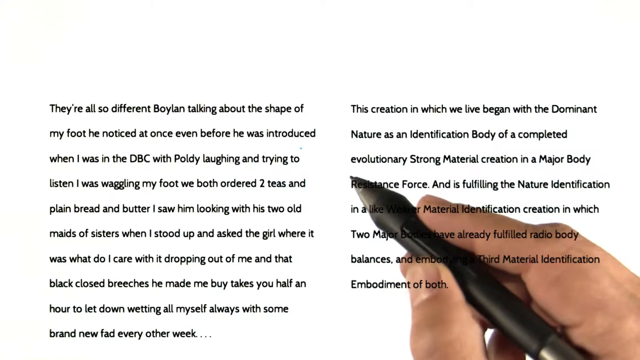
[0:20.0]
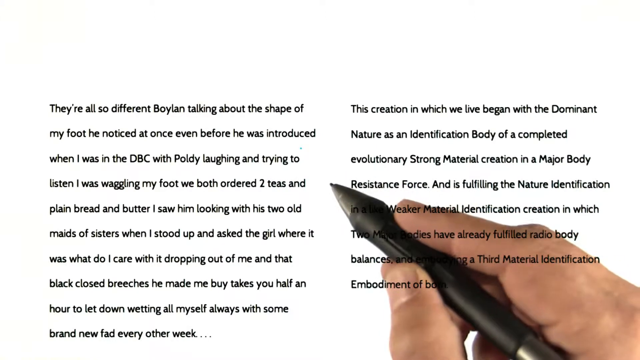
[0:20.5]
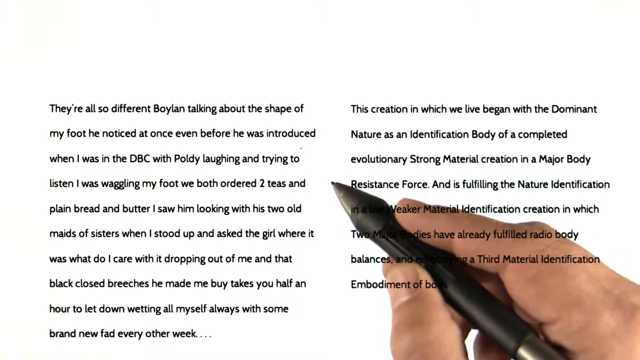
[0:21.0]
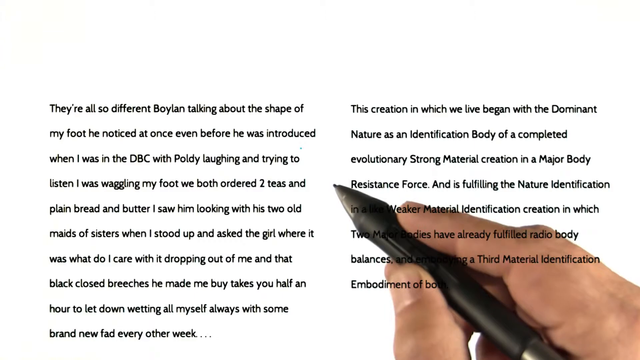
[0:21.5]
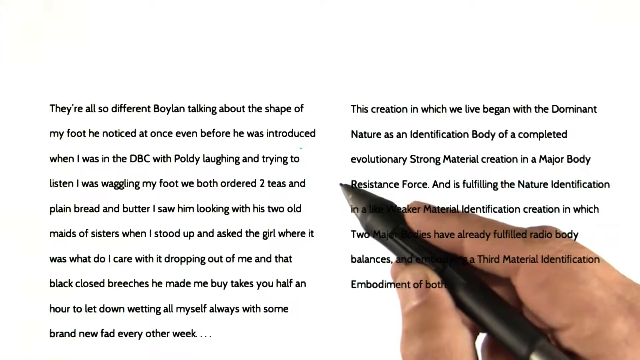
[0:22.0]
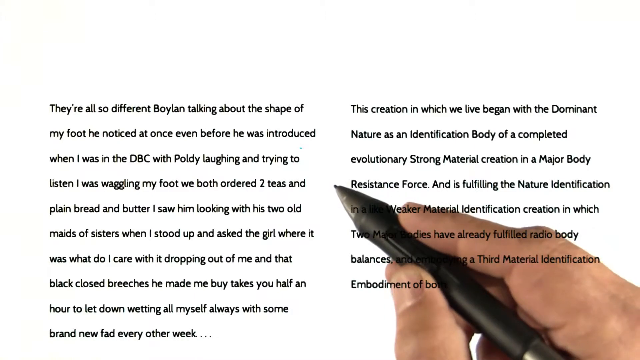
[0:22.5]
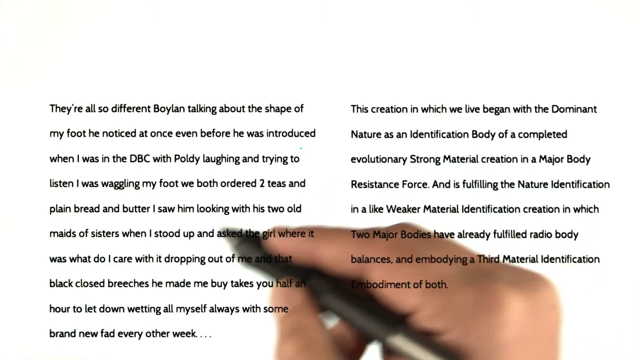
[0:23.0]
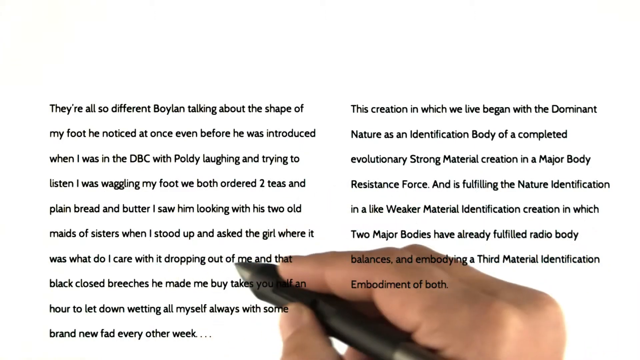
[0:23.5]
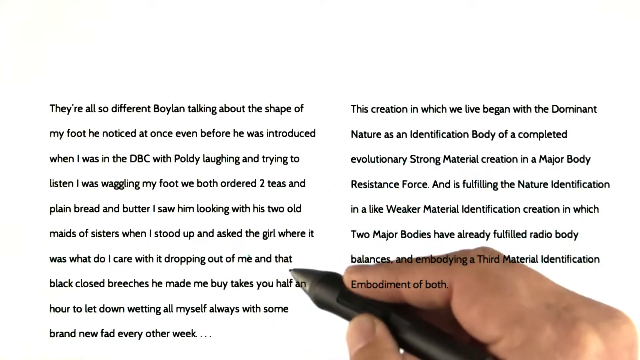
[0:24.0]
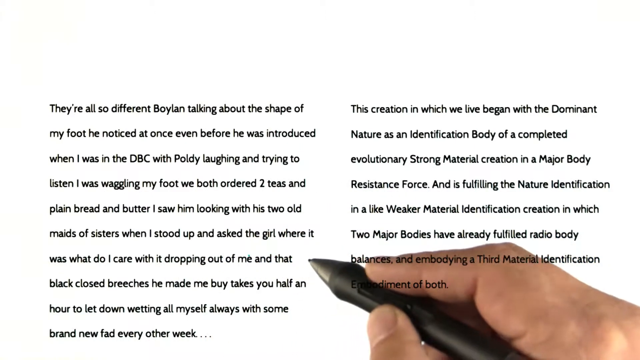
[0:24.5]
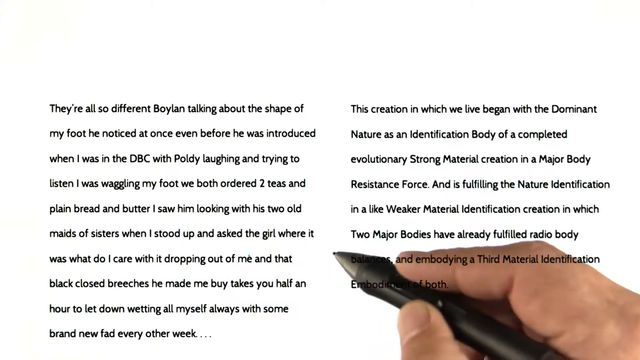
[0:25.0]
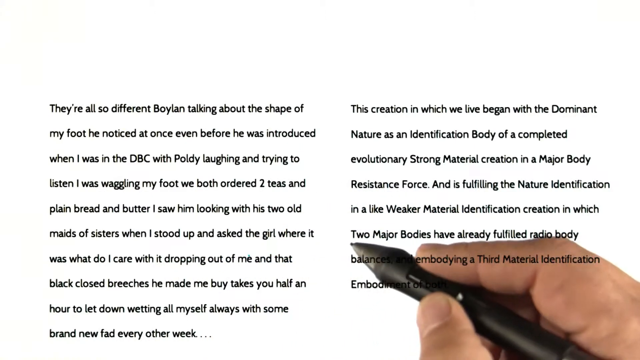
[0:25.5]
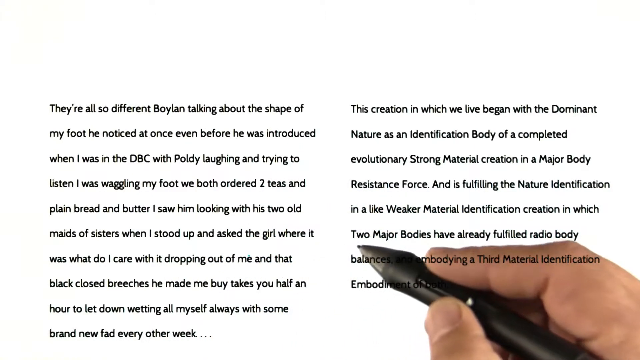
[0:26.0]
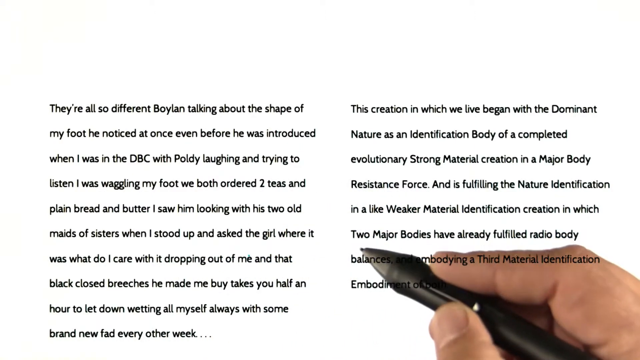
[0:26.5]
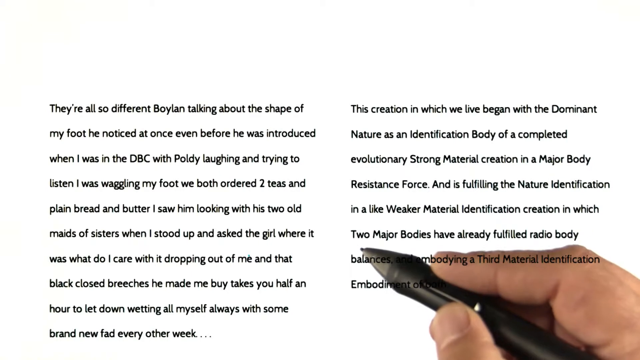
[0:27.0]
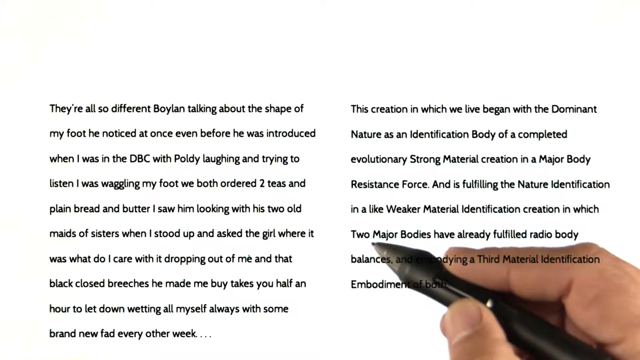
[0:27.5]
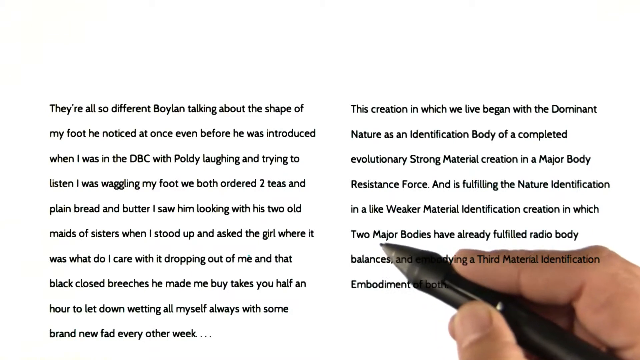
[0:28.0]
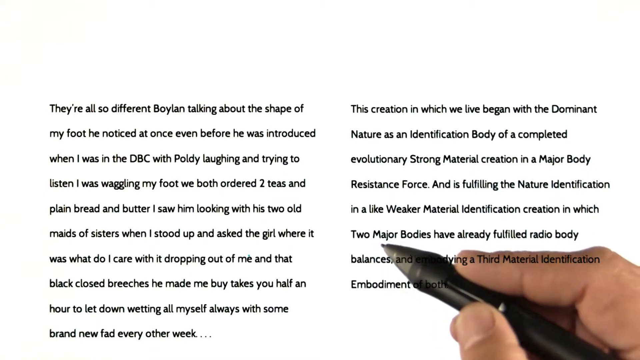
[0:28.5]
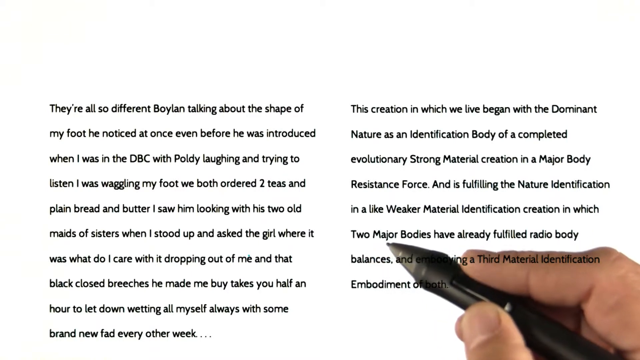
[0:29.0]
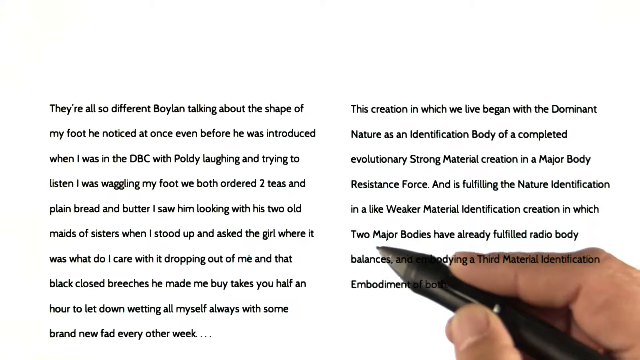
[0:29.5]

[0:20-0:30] The hand still holds the pencil, which is kind of resting between the two paragraphs. It moves toward the left side and seems to go under a line that says "What do I care? What they're dropping out of me?", moving from the left of that line to the right. It stays there for a bit, then moves toward the right side and seems to go under a line that says "two major bodies have already fulfilled radio body," where the hand hovers.